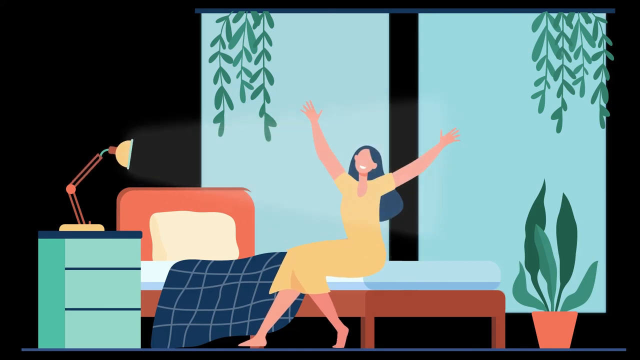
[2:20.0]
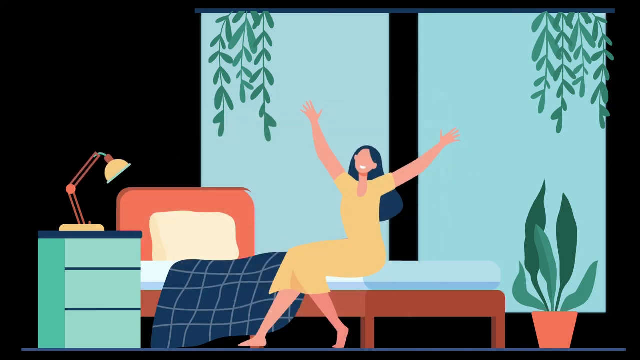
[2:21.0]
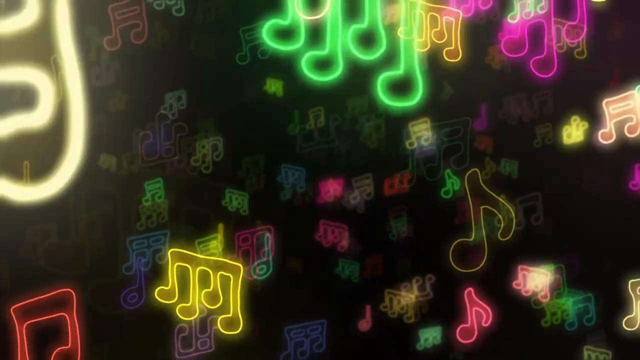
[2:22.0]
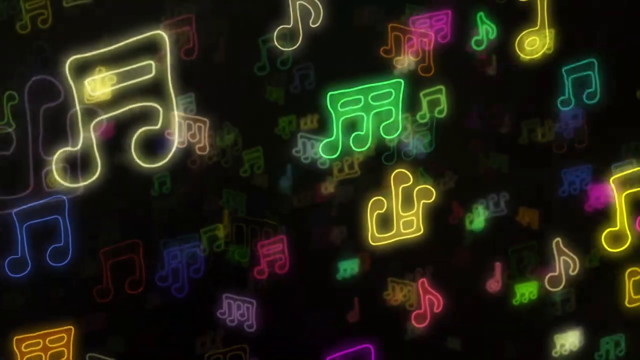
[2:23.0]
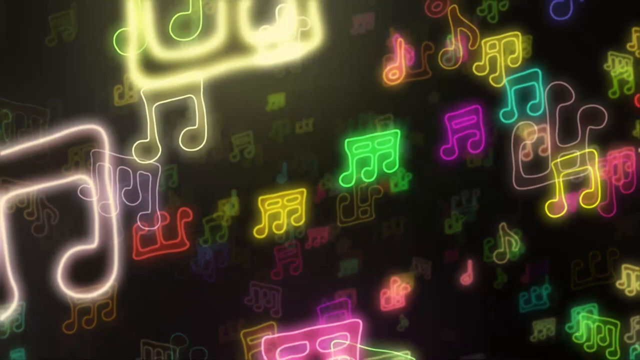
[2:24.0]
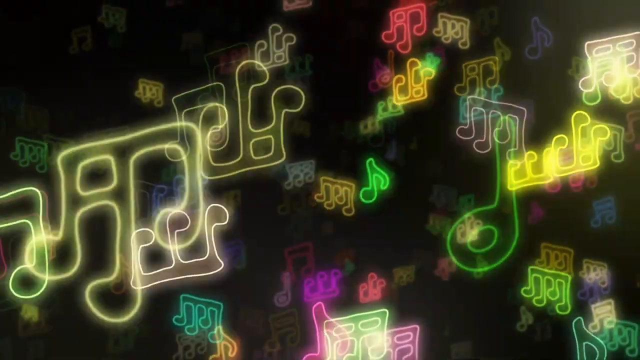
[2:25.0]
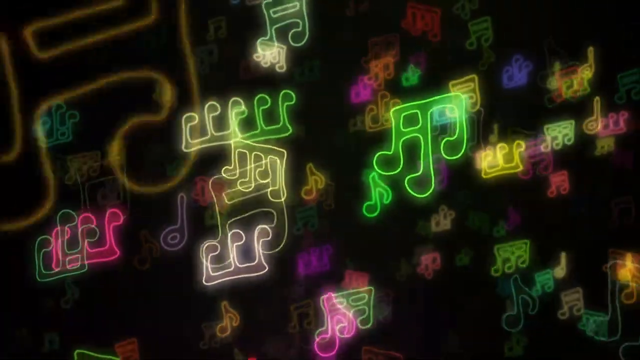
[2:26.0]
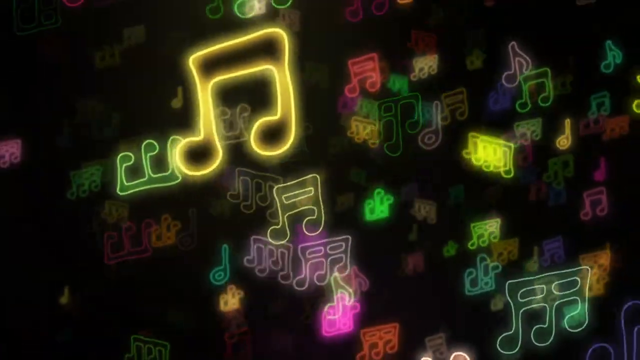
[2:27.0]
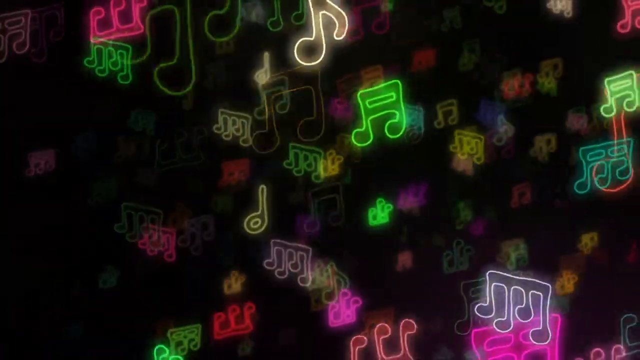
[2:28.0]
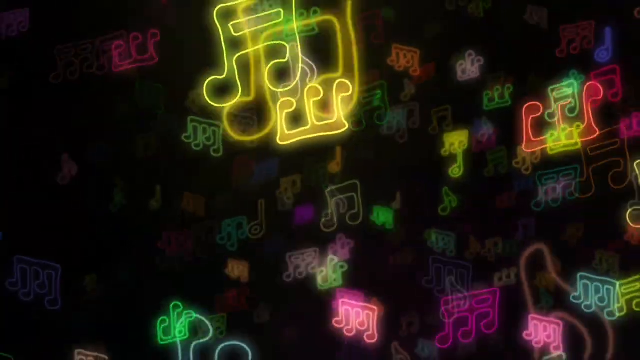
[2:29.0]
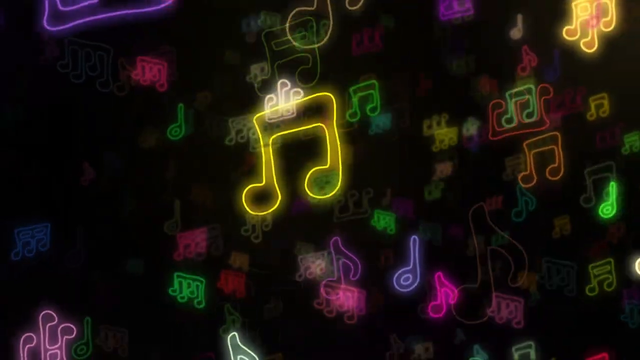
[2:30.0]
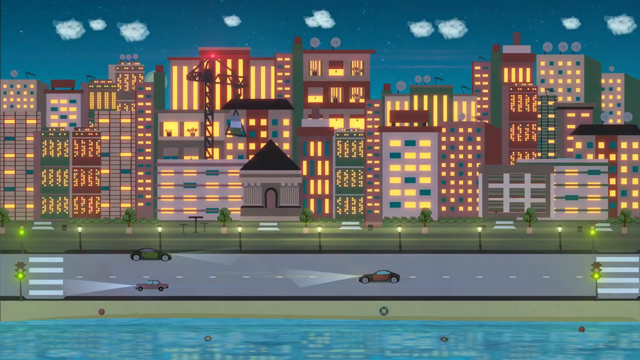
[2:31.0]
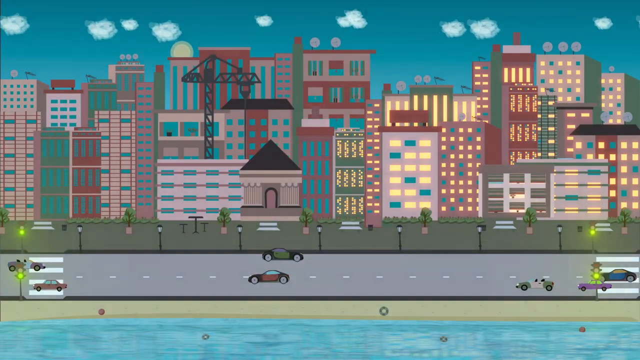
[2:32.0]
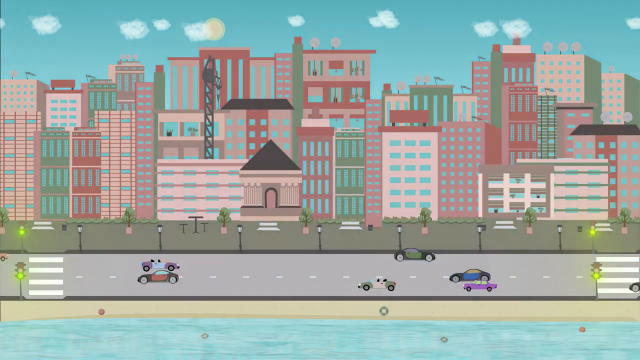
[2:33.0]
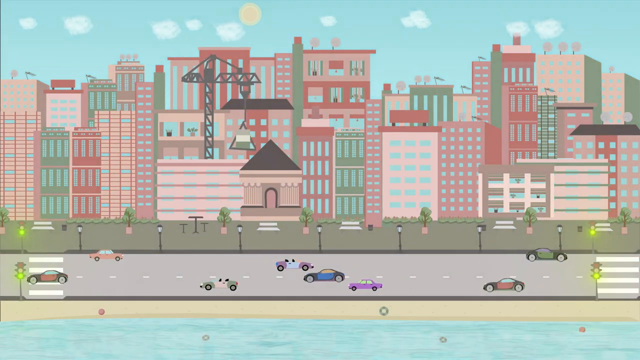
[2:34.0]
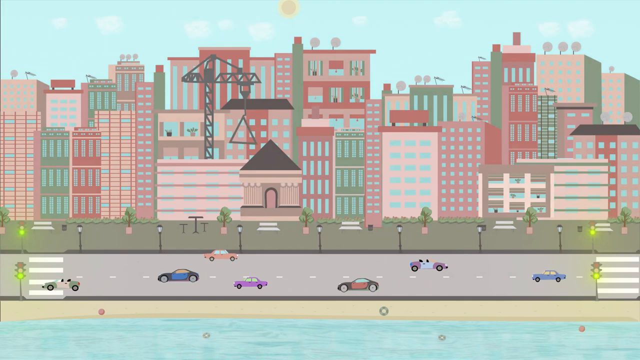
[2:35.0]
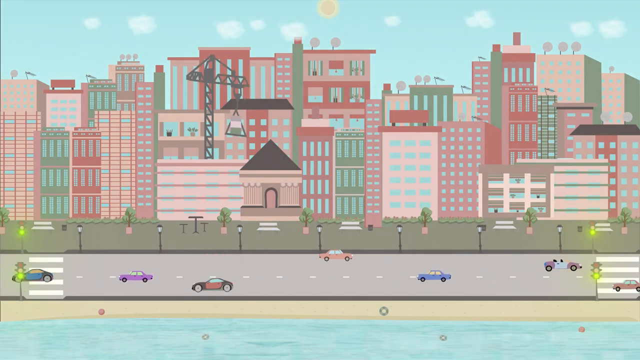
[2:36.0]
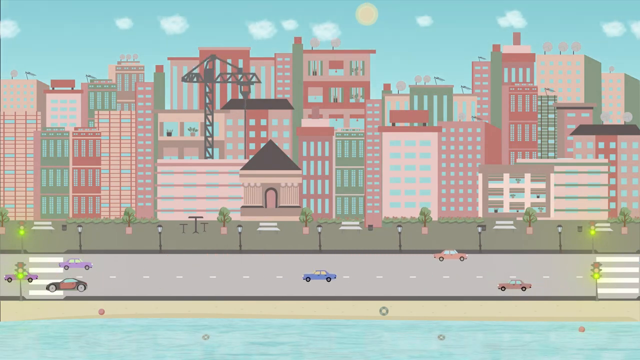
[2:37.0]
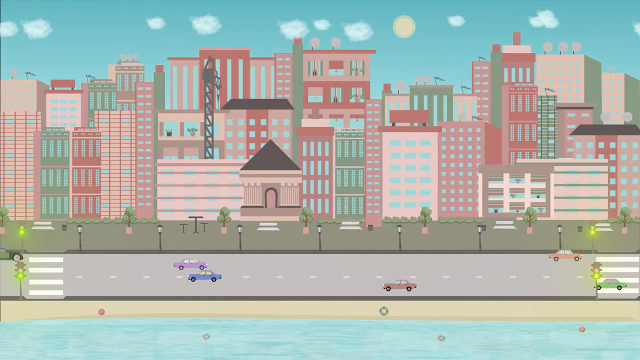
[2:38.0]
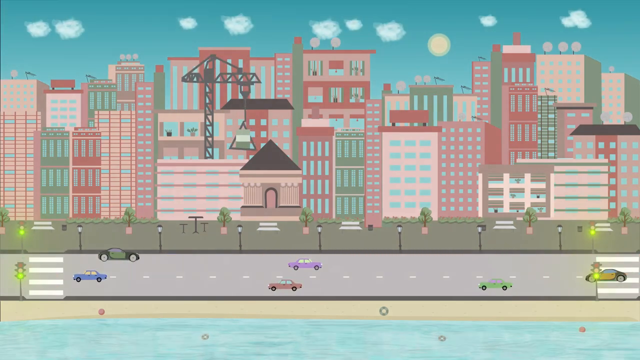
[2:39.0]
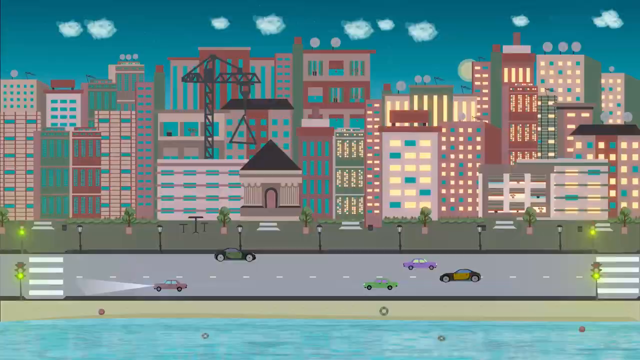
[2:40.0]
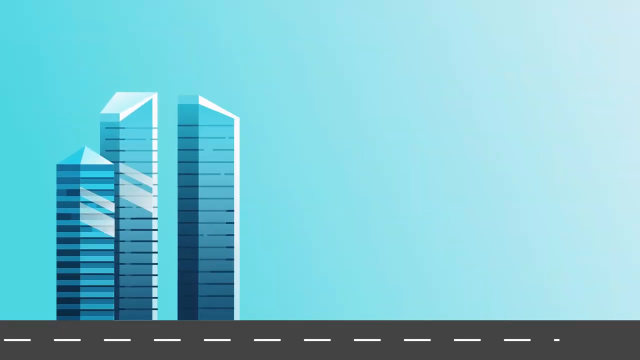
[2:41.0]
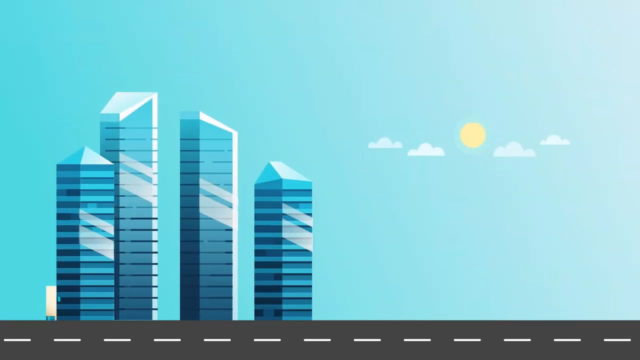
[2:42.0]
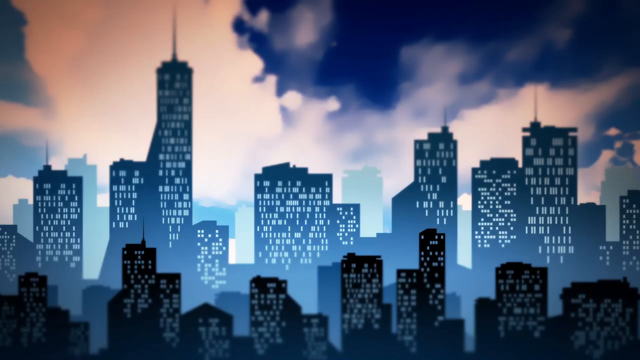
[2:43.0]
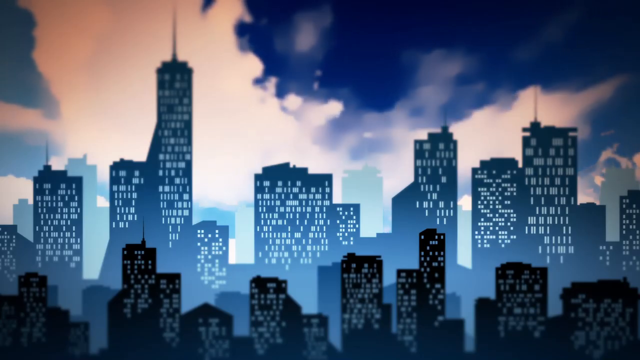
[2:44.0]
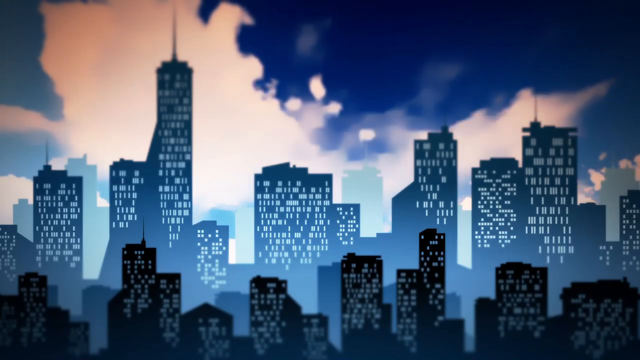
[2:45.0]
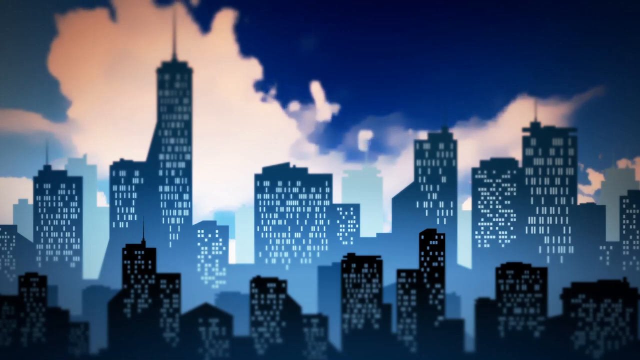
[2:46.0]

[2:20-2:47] A black background shows many different music notes, some with the black bar on the top and some with the black bar on the bottom, in different colours, floating across the screen. It then shows a city where all the buildings have their lights on and the sky is dark. It looks like it goes from night to day, as the lights in the buildings shut off from left to right, the sky turns light blue, the sun comes out in the sky, and a crane moves around. It then goes to nighttime again, with the lights turning back on in all the buildings from right to left. Next comes another city of skyscrapers, with really dark clouds above it.